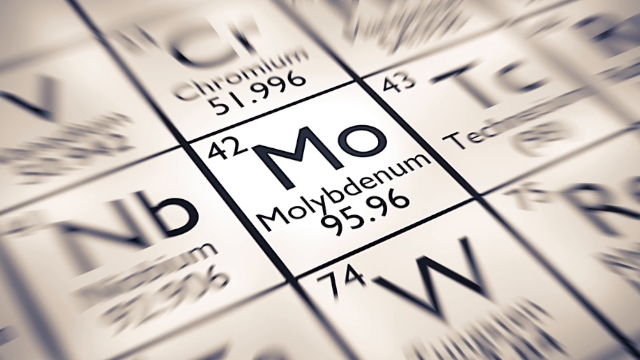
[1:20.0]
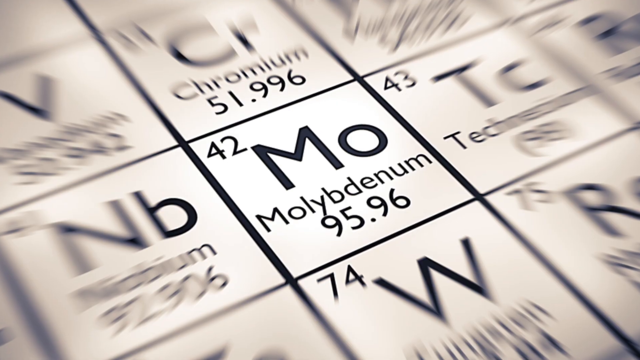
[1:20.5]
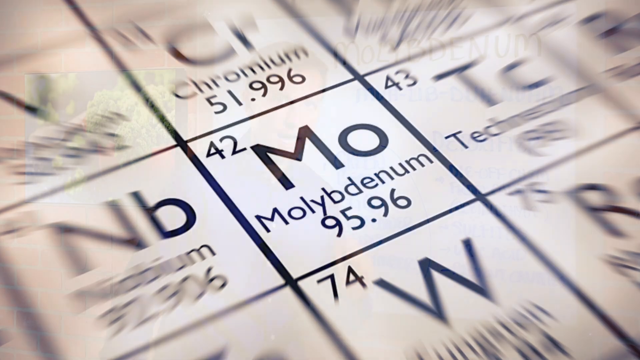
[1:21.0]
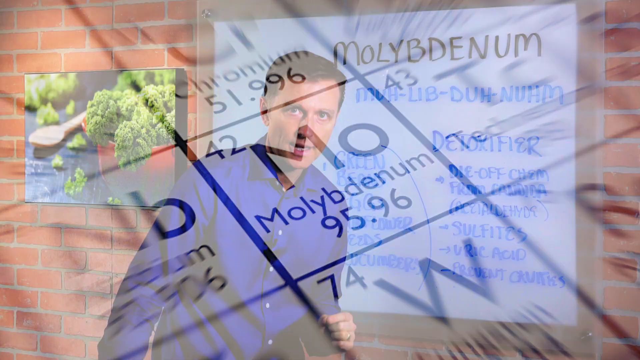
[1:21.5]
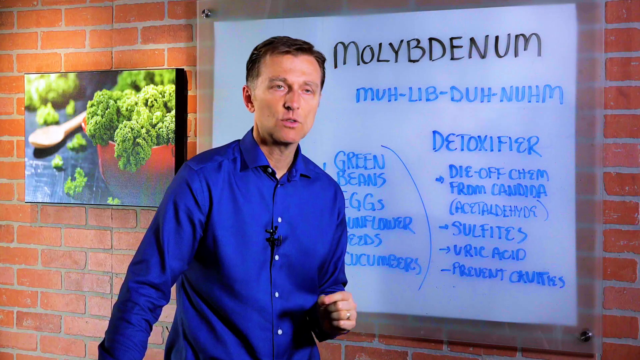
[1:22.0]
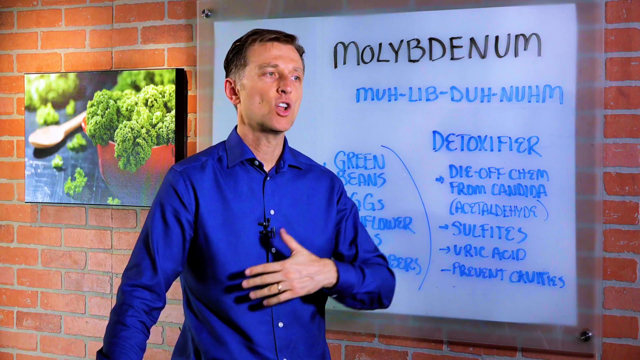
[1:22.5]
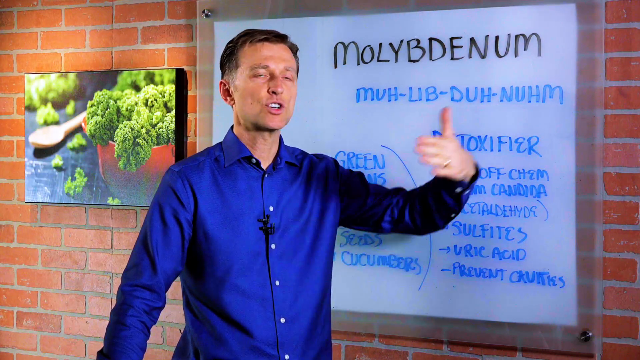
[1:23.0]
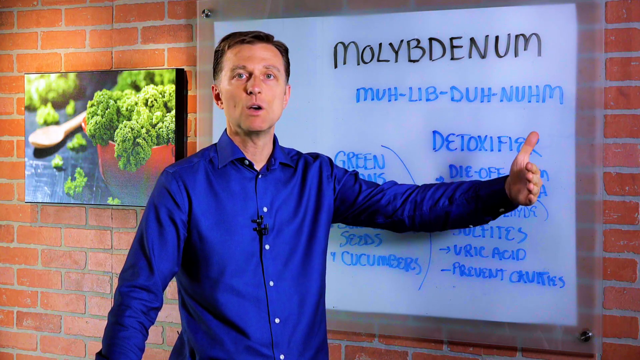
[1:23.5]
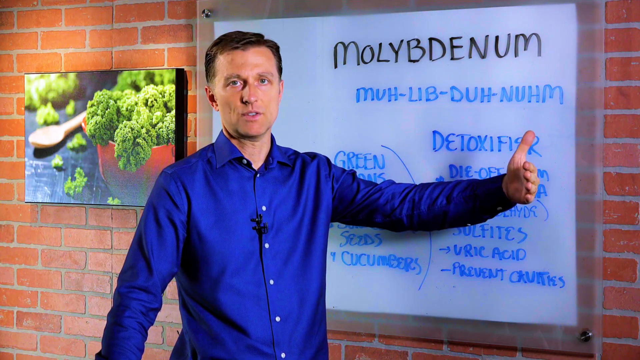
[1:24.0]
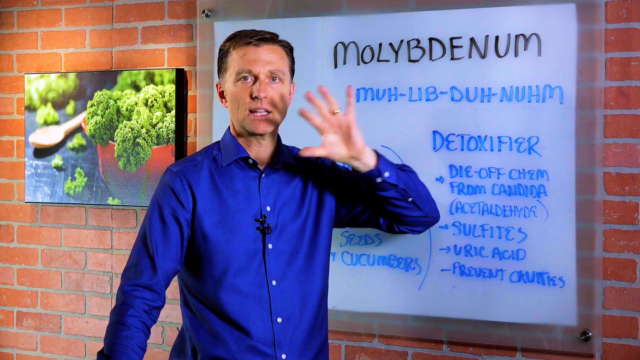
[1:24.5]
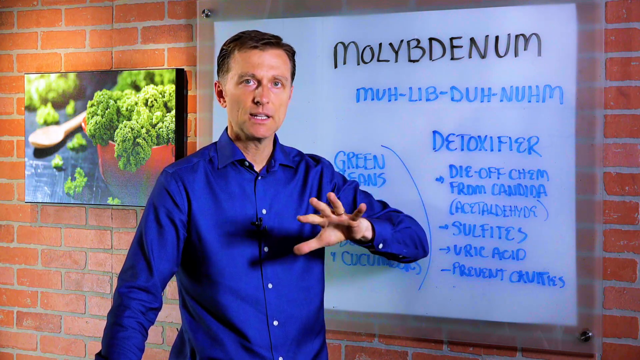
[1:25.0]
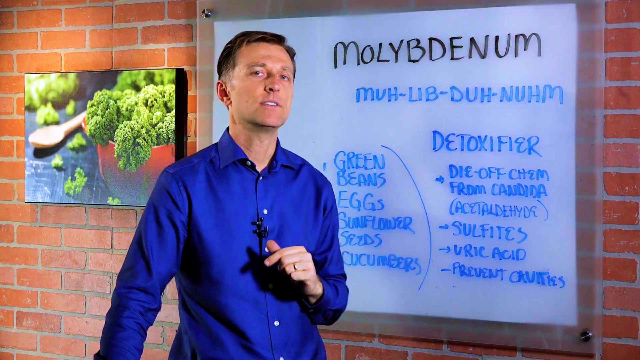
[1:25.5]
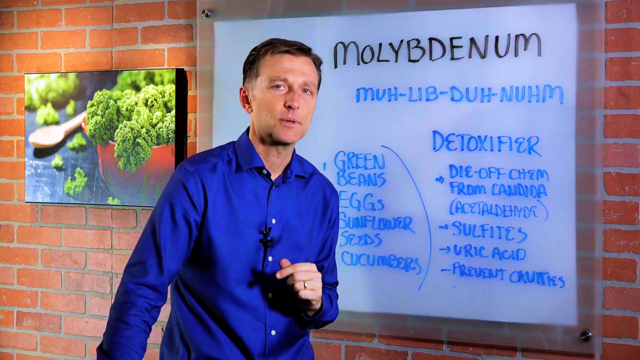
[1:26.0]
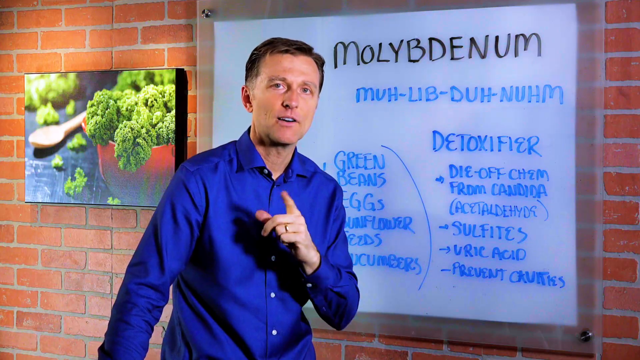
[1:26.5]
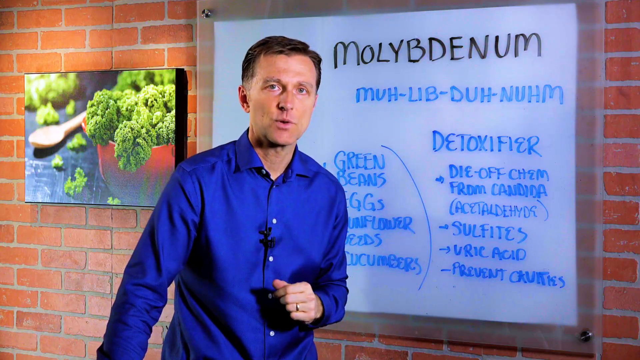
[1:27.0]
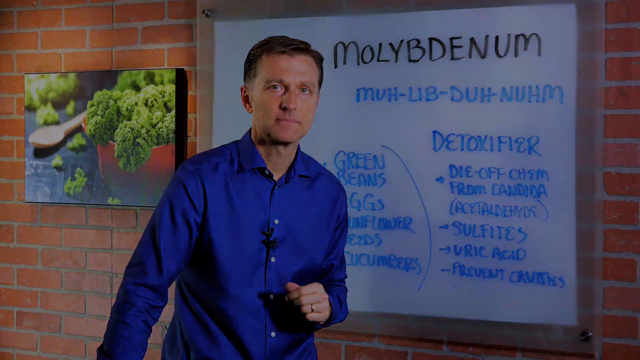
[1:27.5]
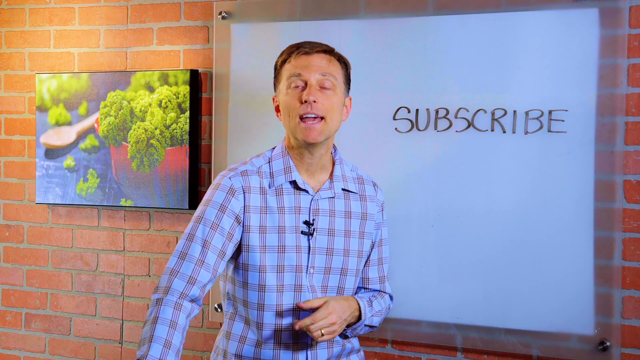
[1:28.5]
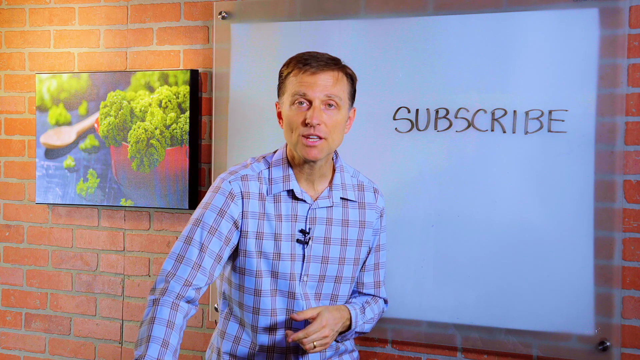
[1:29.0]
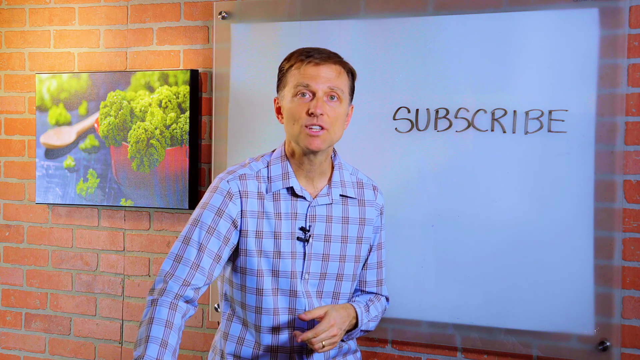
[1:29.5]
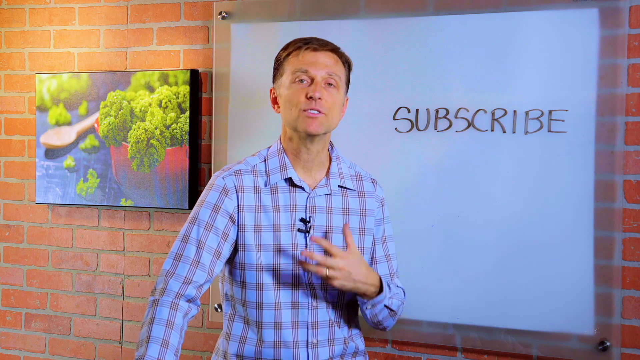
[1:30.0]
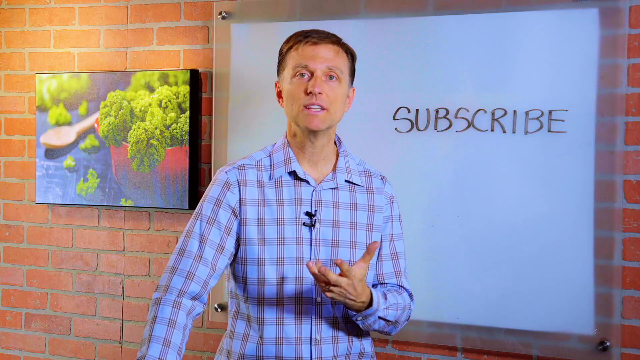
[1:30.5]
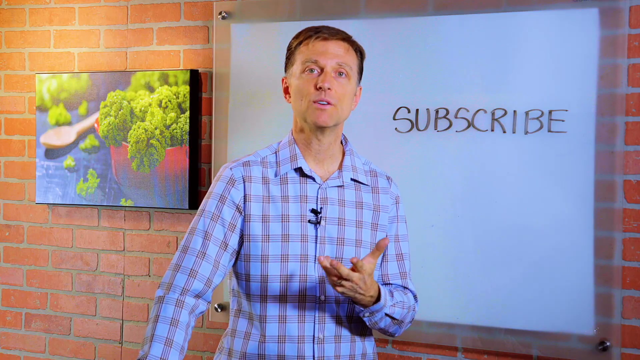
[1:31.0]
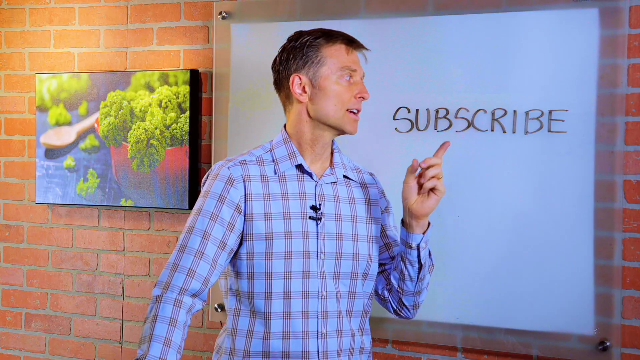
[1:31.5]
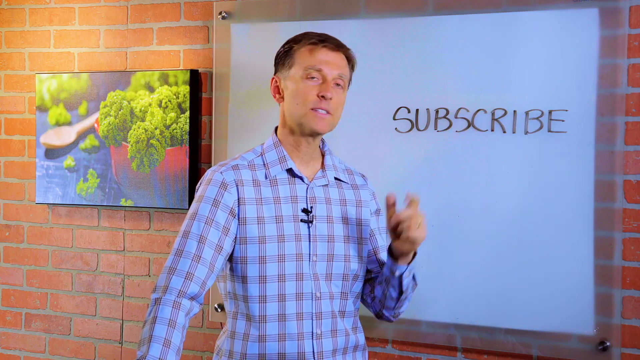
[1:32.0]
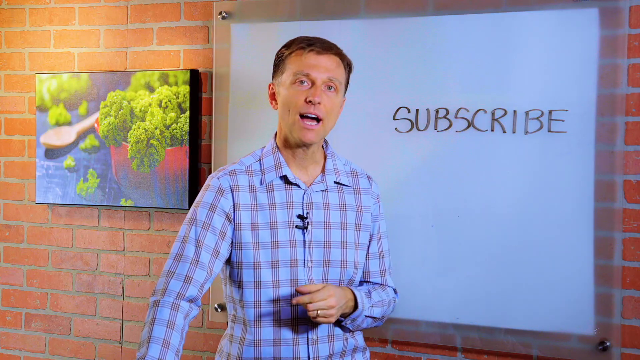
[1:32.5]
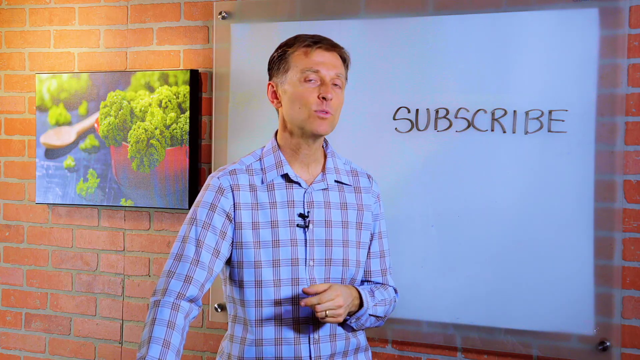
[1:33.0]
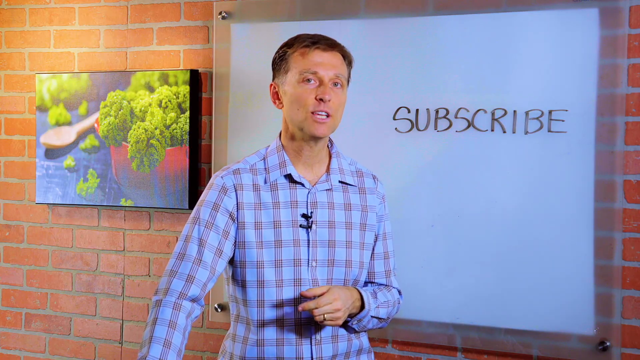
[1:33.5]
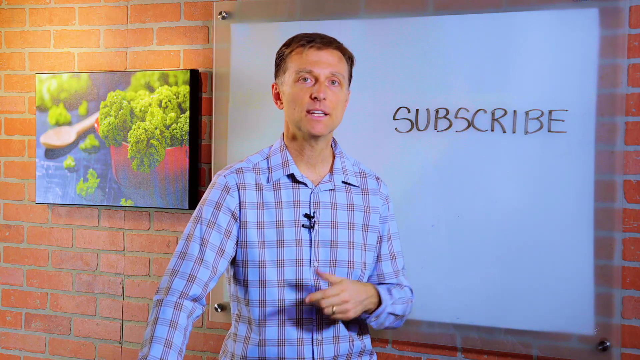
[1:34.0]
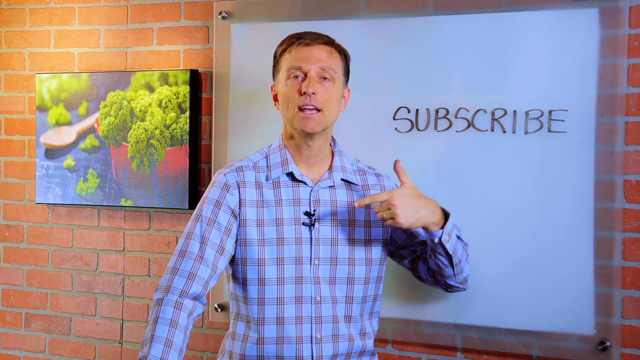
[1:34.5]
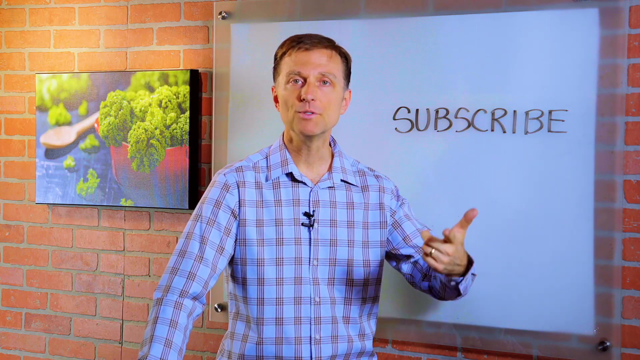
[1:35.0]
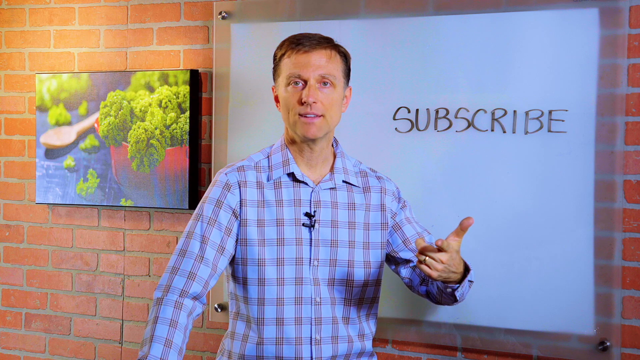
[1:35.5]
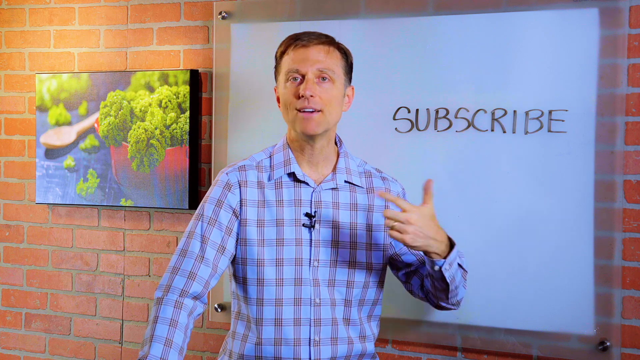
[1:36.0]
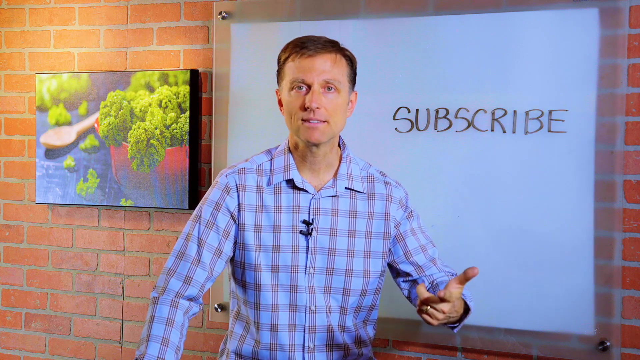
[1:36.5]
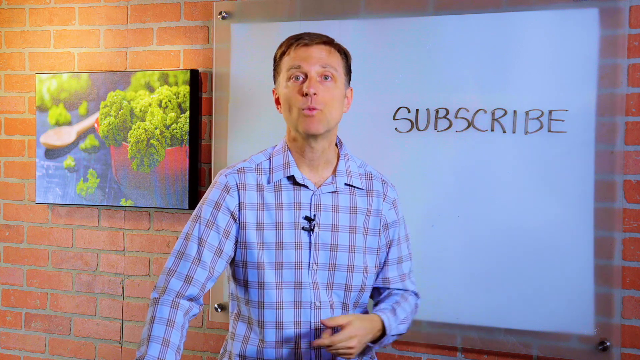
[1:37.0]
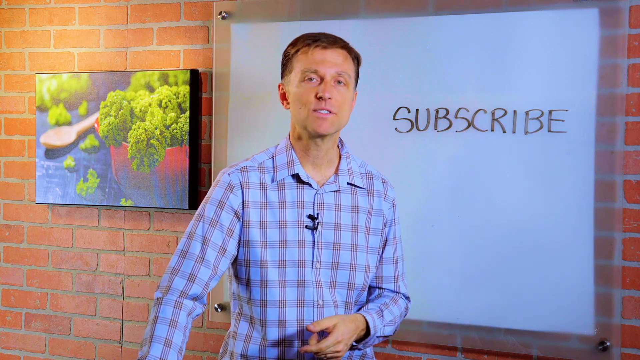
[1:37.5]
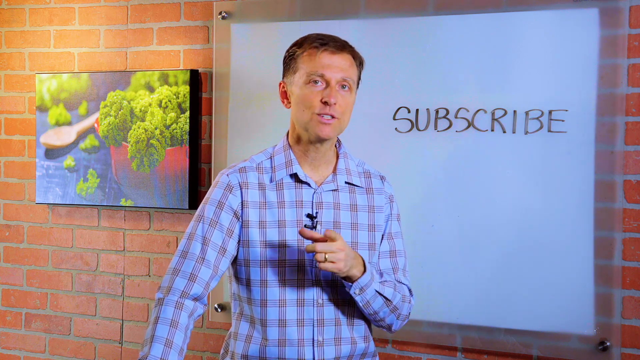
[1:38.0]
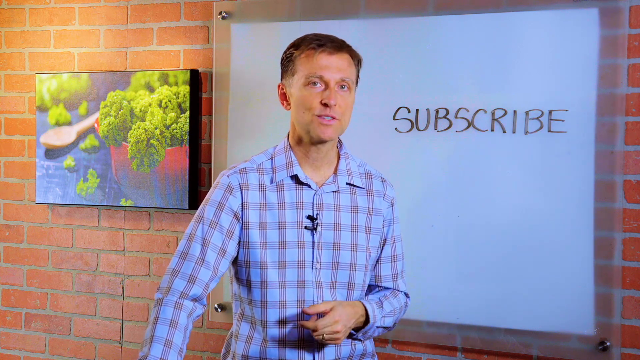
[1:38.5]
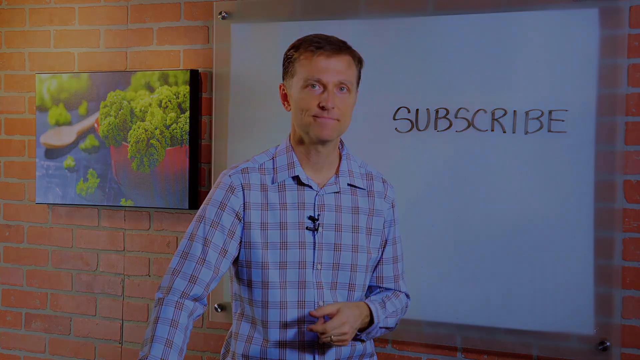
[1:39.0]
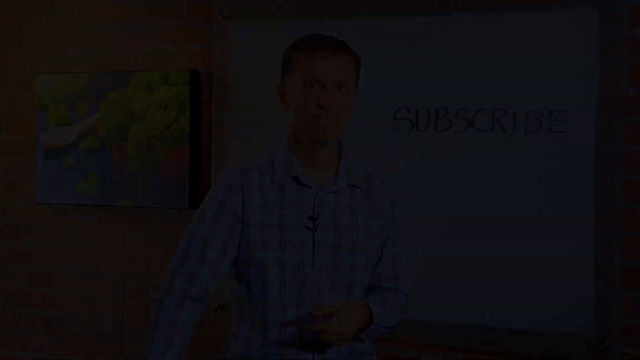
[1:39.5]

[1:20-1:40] A quick fade leads to the periodic table of elements, focused on number 42, "MO" or molybdenum, with "95.96." Around it is a grid of other elements, such as "R" above it, "W" below it, "TC" to the right and "NV" to the left, all slightly blurred, while the focus stays on MO in the centre. The male then talks again, extending his left arm outstretched with his palm open and thumb facing upwards, looking directly at the camera. His elbow bends, his fingers are outstretched, and he moves his palm towards the centre of the screen and then downwards before his hand closes and relaxes to a neutral position. Still looking and talking at the camera, he makes a slight pointing sign with his left index finger before his hand relaxes and moves back to a neutral position. The screen fades to black. The next screen looks like a pre-recorded outro: the same male, this time wearing a checked shirt. The background has the same two elements, the painting or photo of the vegetables in the red bowl with the spoon, and the whiteboard on the right-hand side, where the only text reads "subscribe." He makes motions with his left hand, then points his index finger at the "subscribe" text and looks at it. Talking to the camera, he moves his left hand back to a neutral position, then moves his forefinger, thumb and hand outwards before pointing towards the camera, still looking directly at it. He makes small gesturing motions with his left arm, followed by another pointing gesture with his index finger from the centre of his body towards the camera, and the screen fades to black.